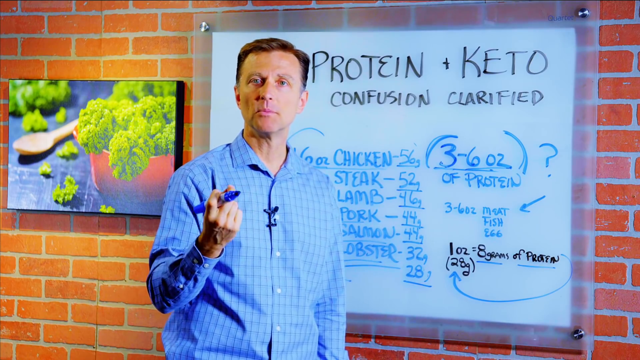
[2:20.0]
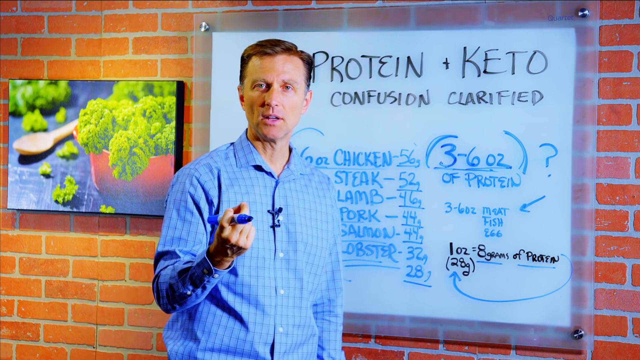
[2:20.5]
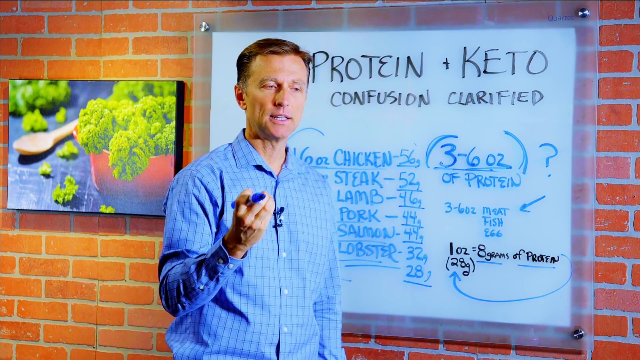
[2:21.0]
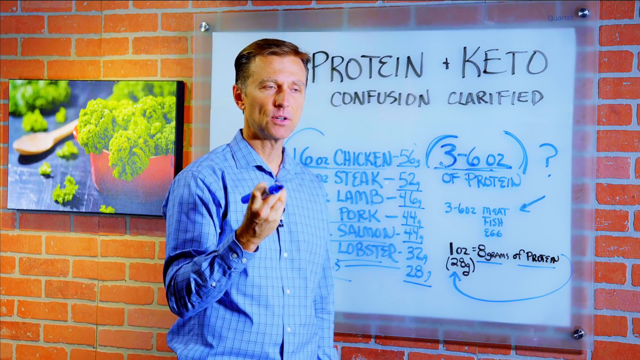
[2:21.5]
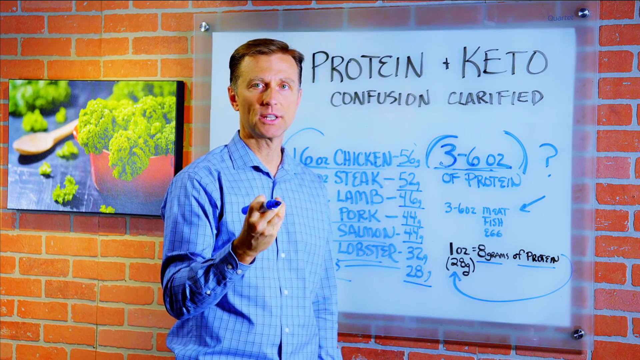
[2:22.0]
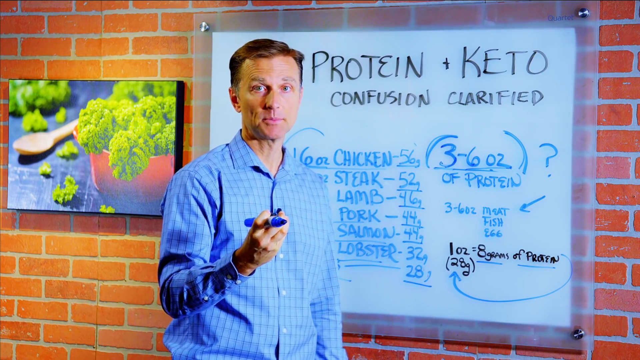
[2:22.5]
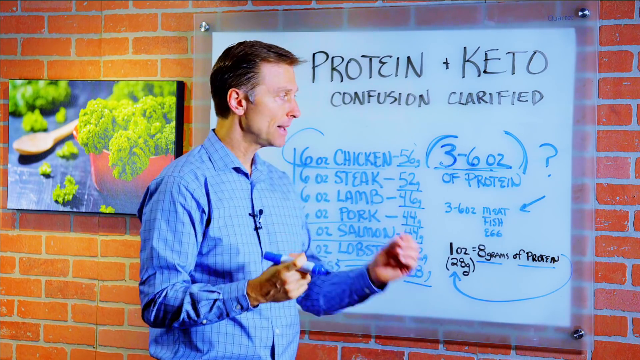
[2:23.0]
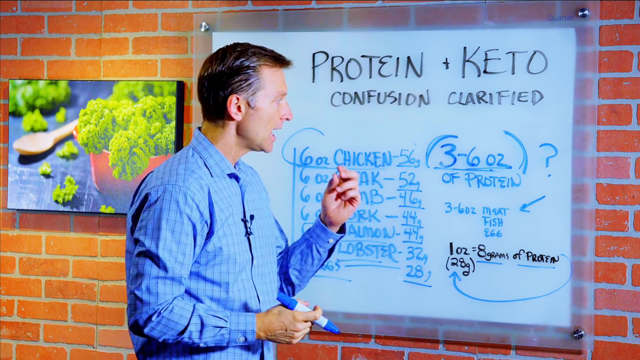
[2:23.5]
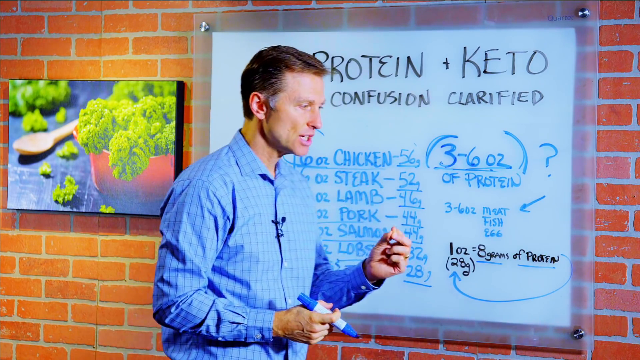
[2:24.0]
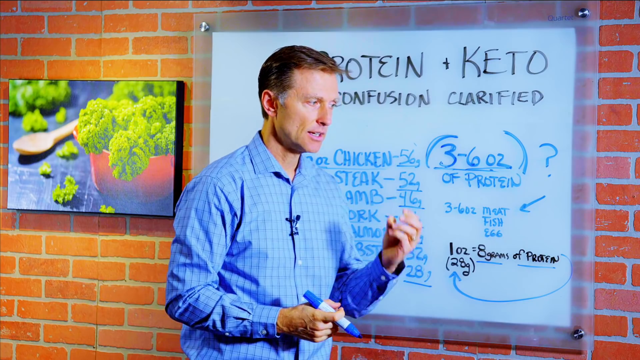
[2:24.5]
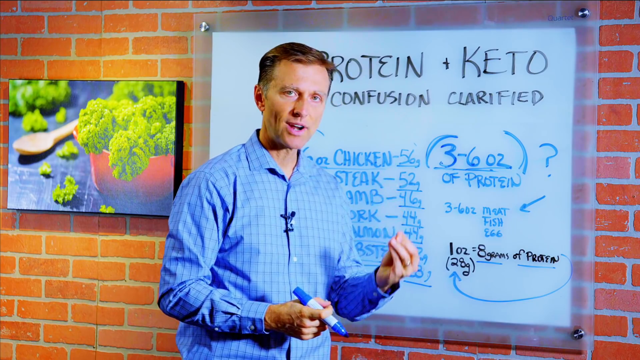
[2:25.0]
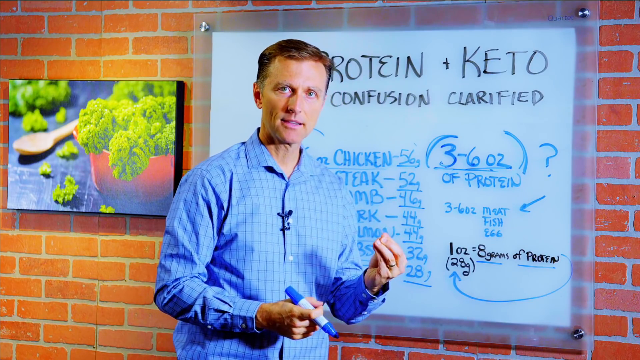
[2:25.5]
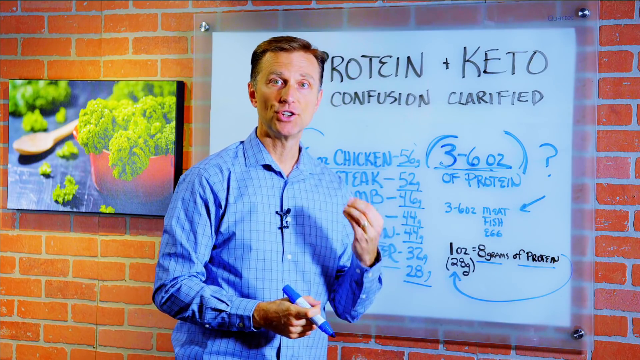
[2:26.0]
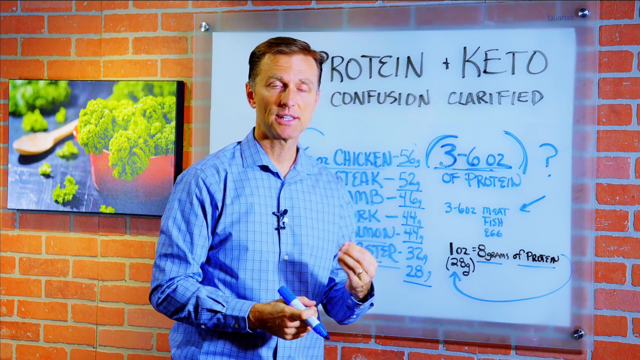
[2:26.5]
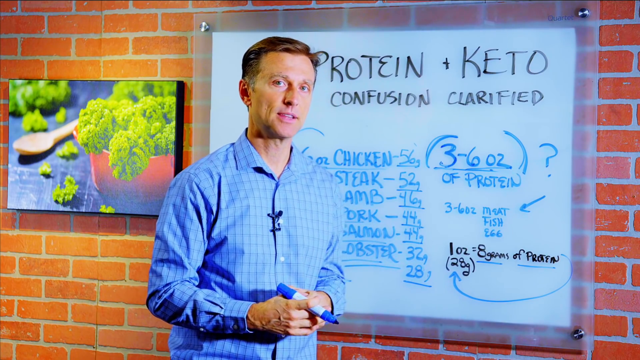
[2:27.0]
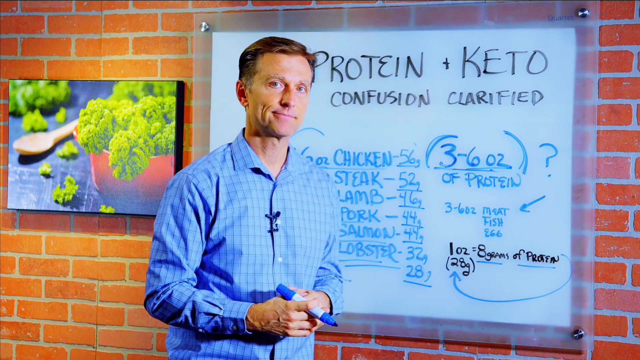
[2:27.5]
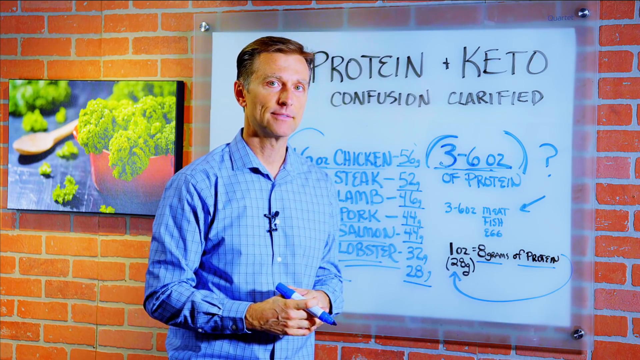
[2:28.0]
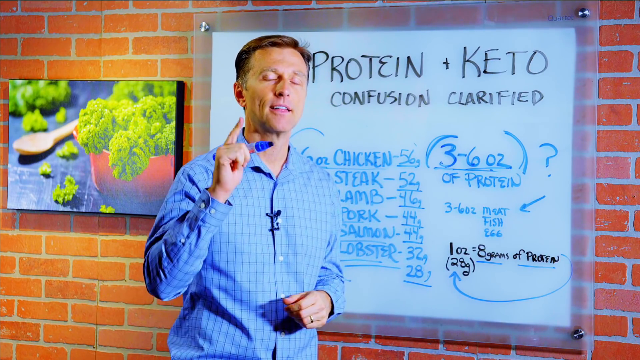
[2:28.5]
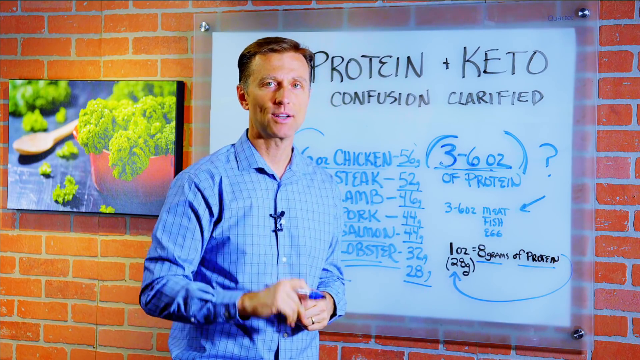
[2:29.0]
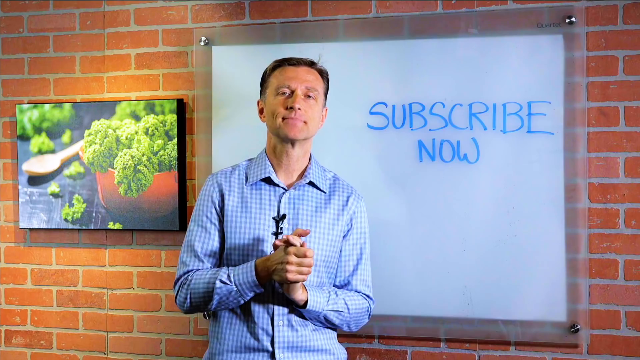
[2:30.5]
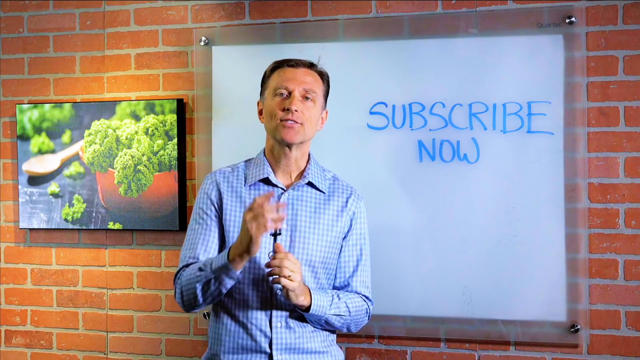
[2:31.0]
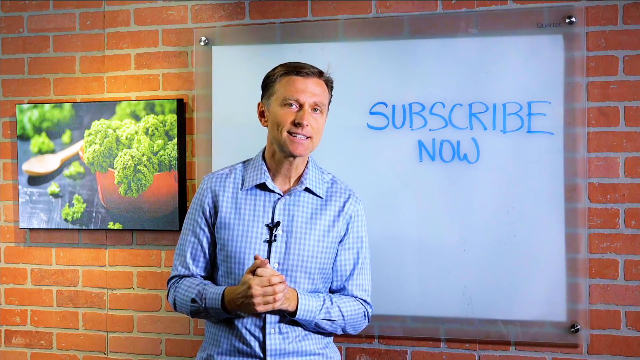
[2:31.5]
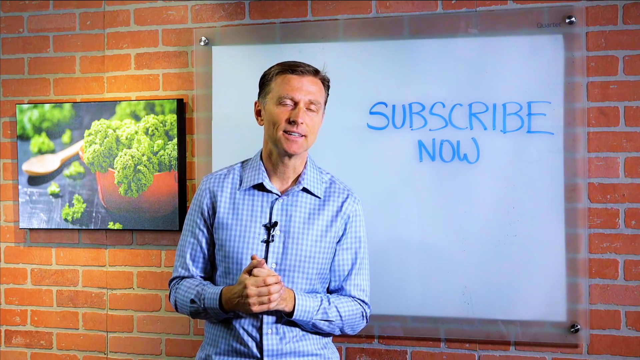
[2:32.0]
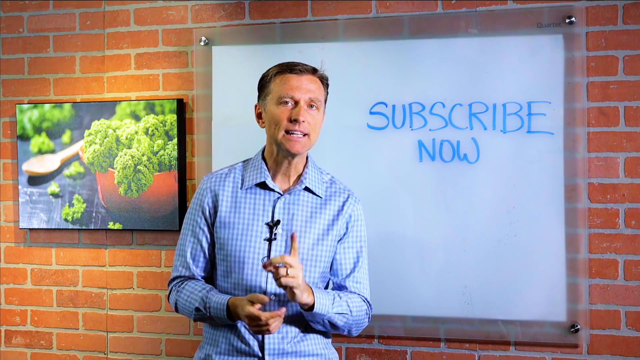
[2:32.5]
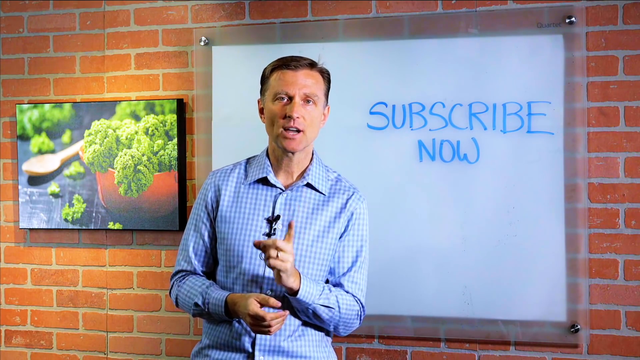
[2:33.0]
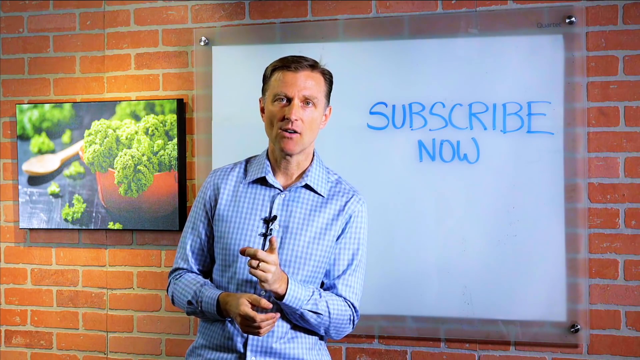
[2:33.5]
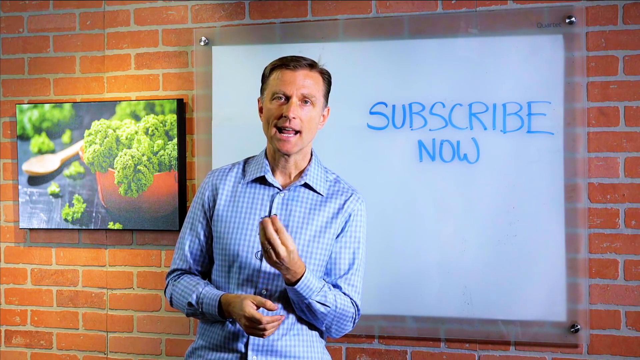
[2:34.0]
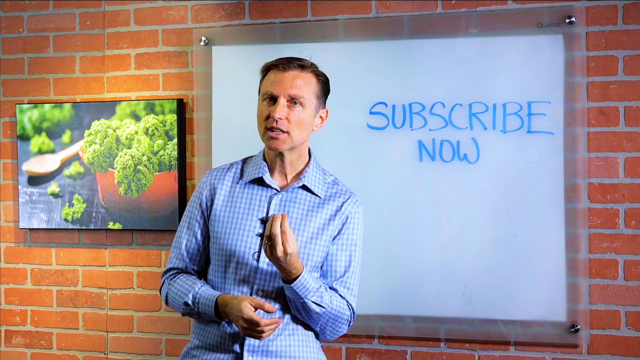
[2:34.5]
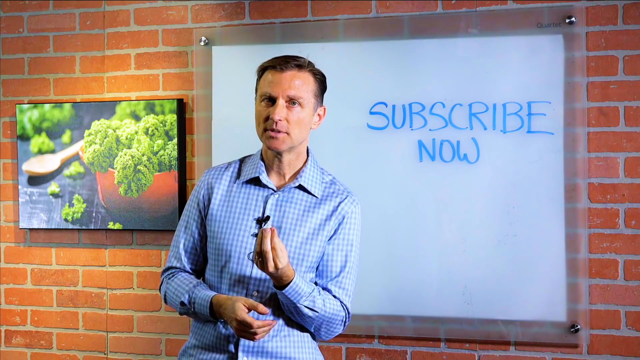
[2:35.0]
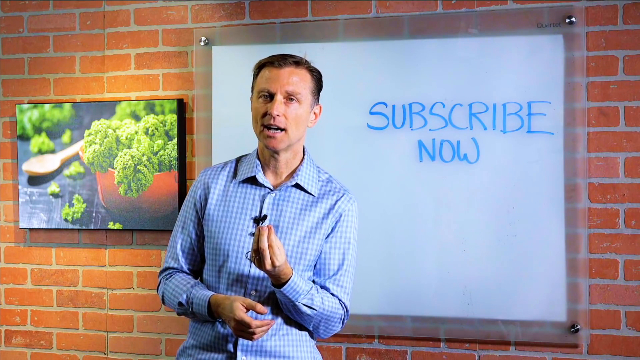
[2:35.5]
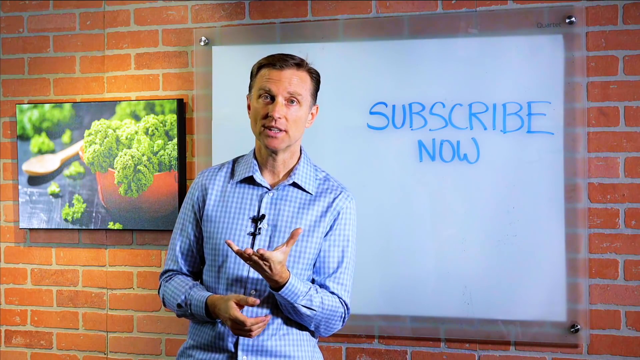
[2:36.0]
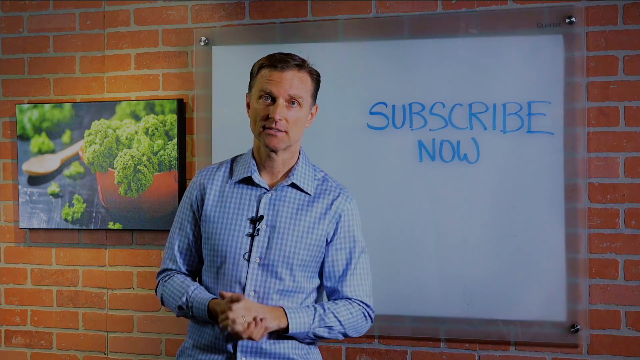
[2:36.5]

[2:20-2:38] The man steps all the way to the left side so everything in both rows on the board can be read clearly. It reads "protein confusion" and "keto clarified". He has listed the amount in ounces of each portion of protein to correlate with the grams of protein taken in: chicken, steak, lamb, pork, salmon and lobster, all in six-ounce portions. To the right of that he has written "three to six ounces of protein" in parentheses with a question mark next to it. Underneath is "three to six ounces meat, fish, or egg", and underneath that, in black text, "one ounce equals eight grams of protein or 28 grams". The man fully faces the camera with the open marker in his hand, pointing at the camera repeatedly as though saying farewell. The video then fades to black.